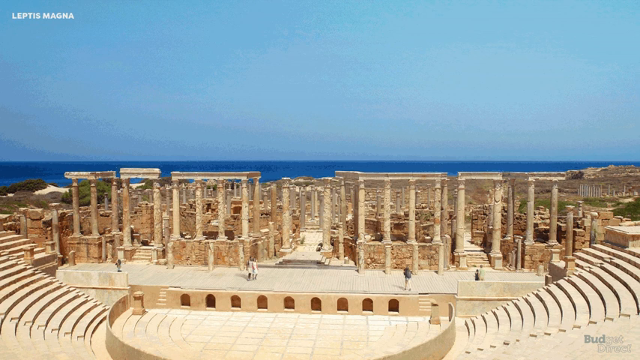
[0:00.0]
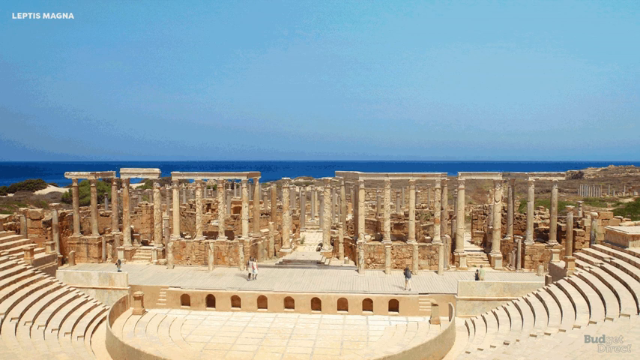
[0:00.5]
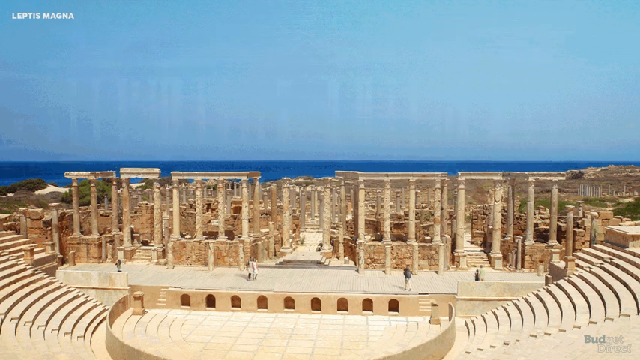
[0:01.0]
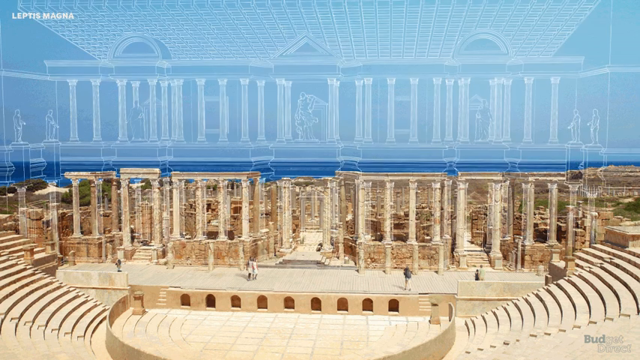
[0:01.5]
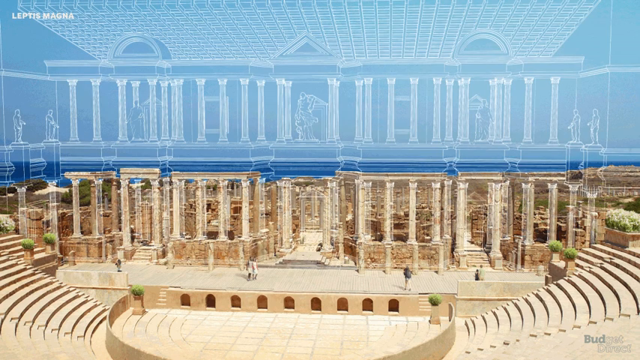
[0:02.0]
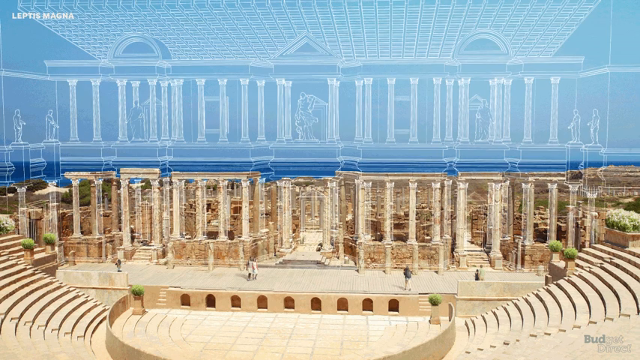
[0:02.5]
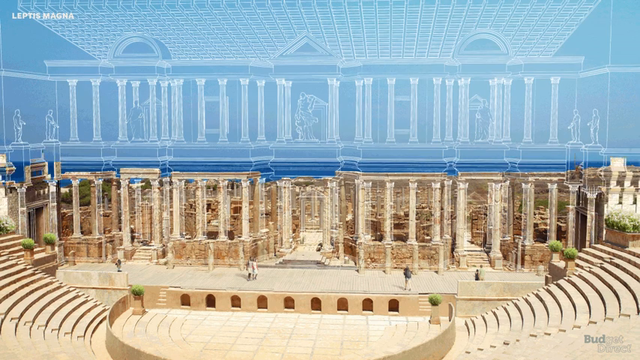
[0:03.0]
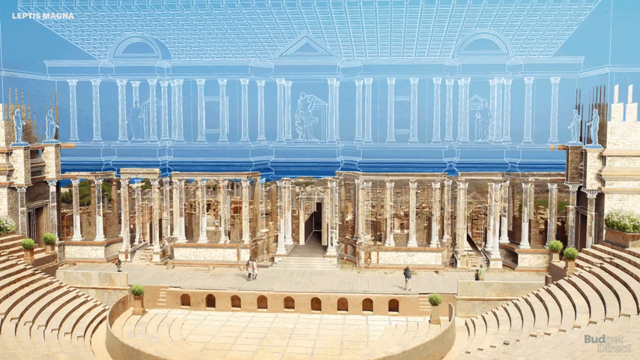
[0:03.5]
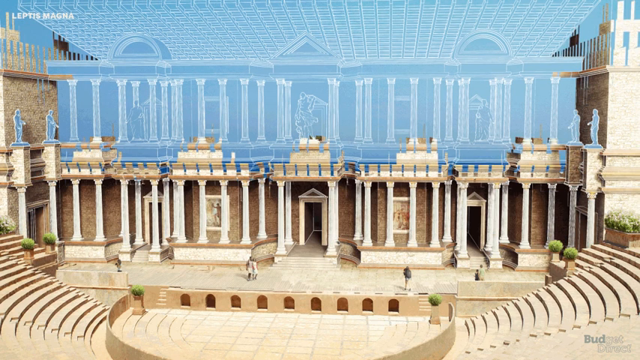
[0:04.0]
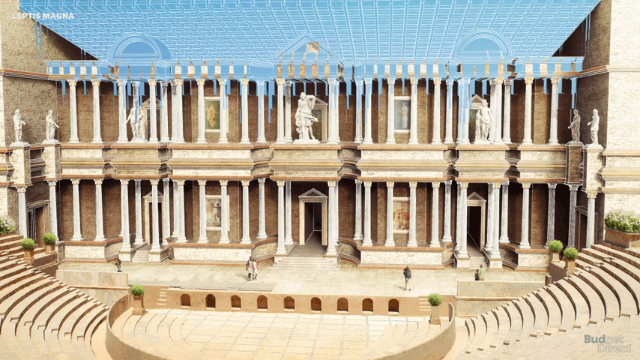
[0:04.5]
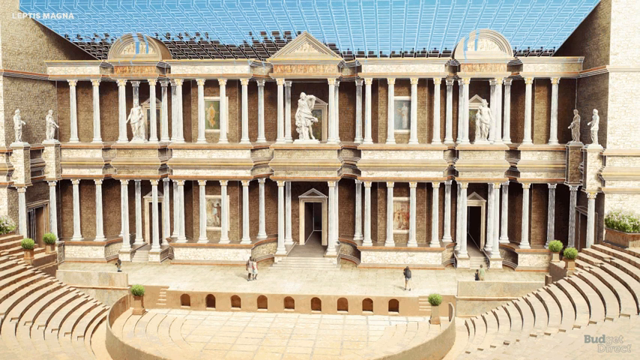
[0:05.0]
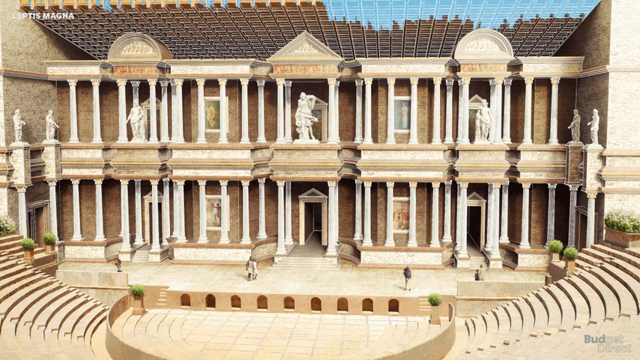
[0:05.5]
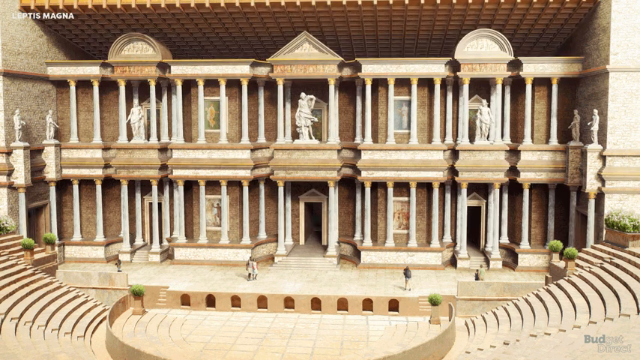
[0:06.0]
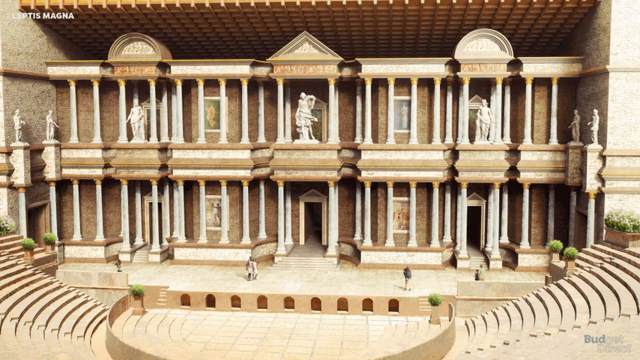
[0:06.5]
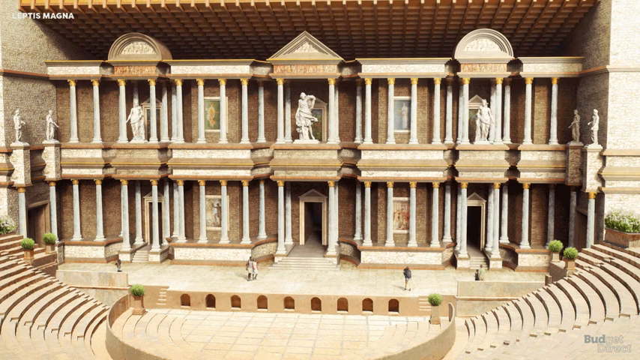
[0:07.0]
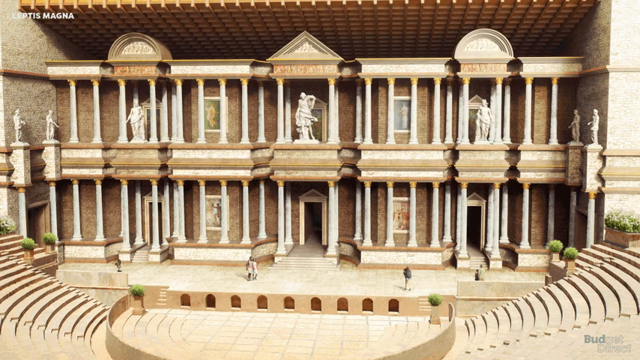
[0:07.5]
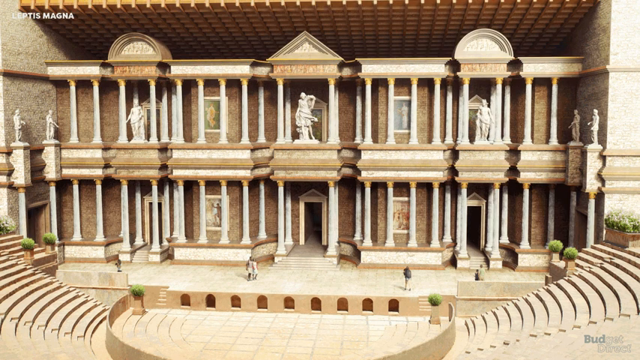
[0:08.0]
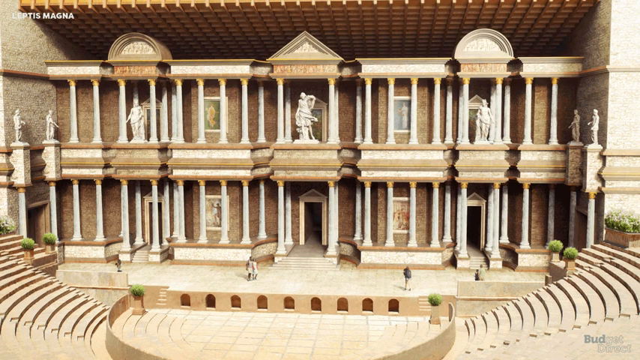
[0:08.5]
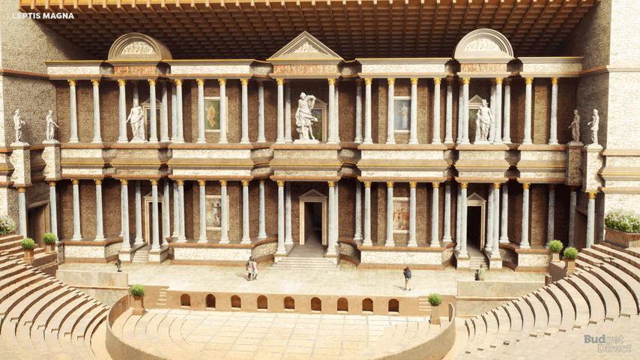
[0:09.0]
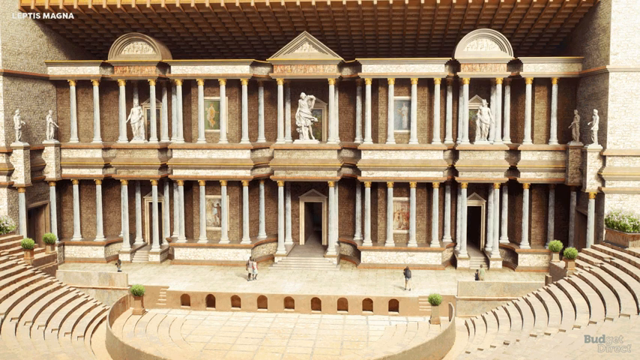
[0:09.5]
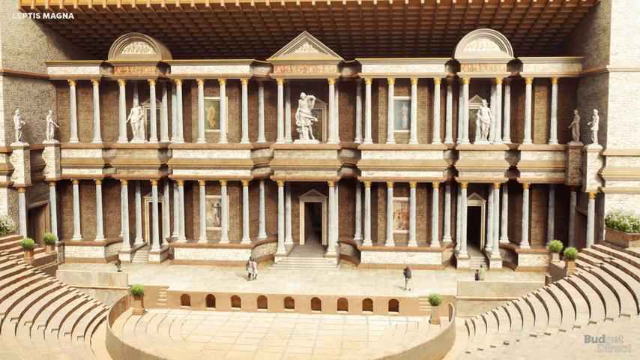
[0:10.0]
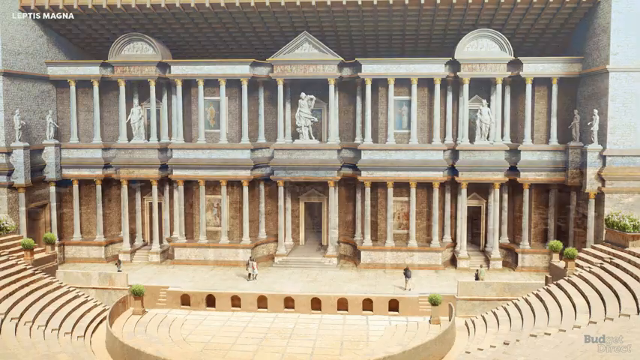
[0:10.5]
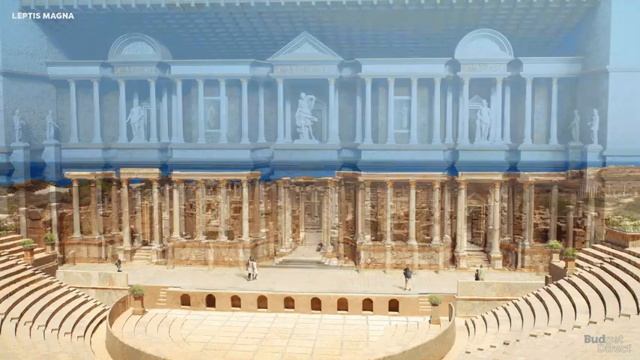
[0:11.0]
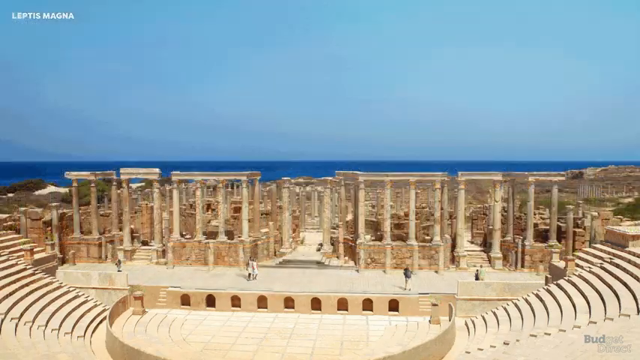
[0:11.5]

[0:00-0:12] The video appears to open on a still image of pillars that seem to belong to some sort of large architectural or historical building, possibly near the water. A kind of print design with a 3D effect then appears over the image, apparently showing how the building looked before it was worn out: rather than a single set of pillars, it had a second floor with pillars as well. The building is reconstructed in 3D as it apparently once looked, with multiple statues that seem to be white, their fabric shown flowing and folding.